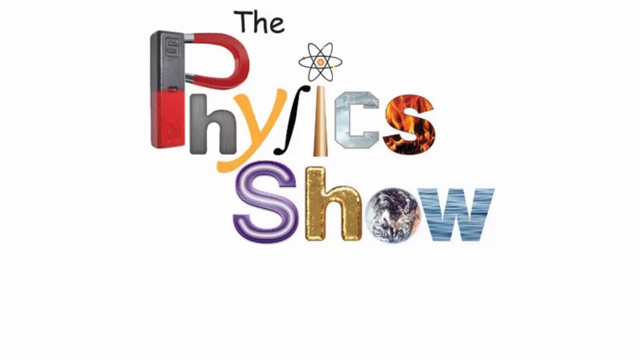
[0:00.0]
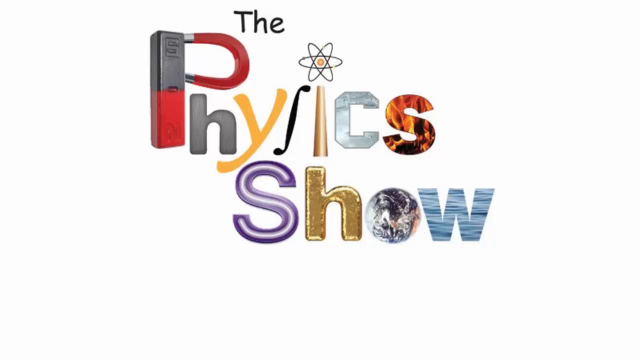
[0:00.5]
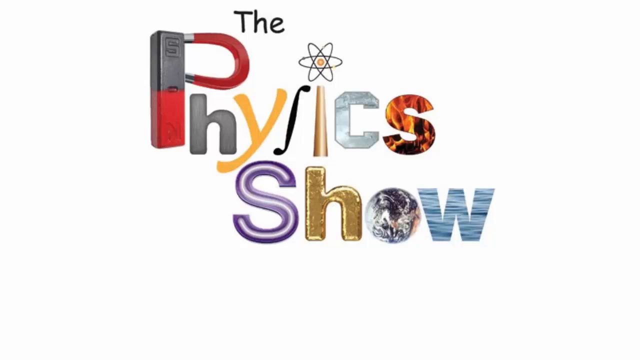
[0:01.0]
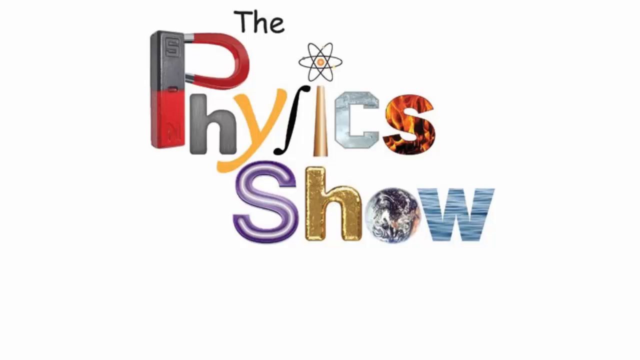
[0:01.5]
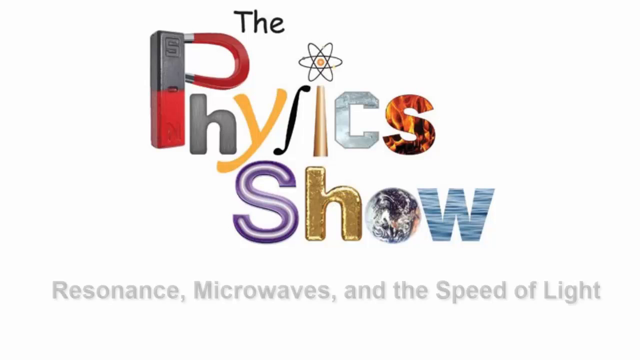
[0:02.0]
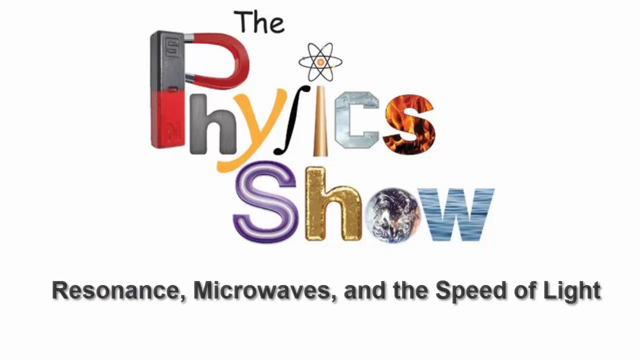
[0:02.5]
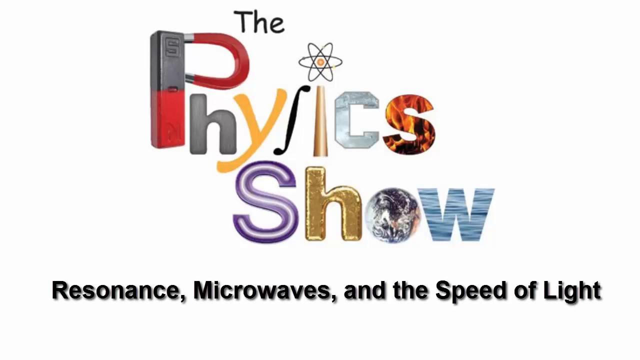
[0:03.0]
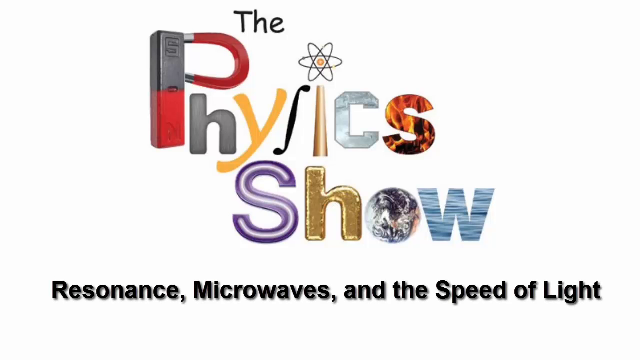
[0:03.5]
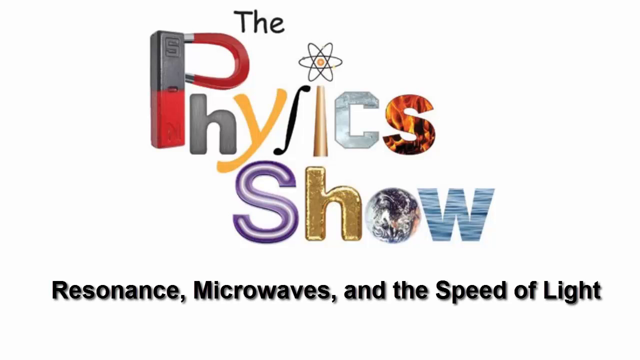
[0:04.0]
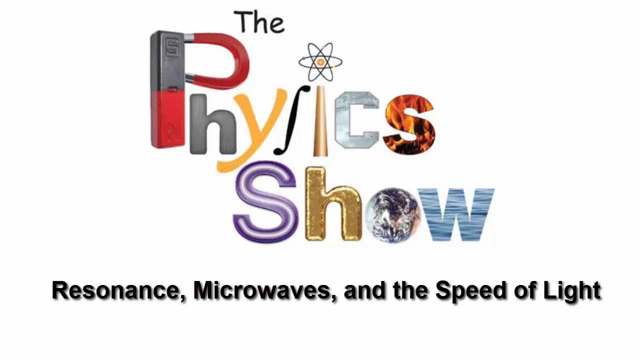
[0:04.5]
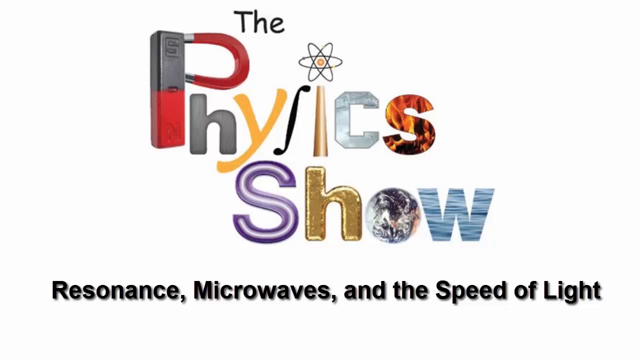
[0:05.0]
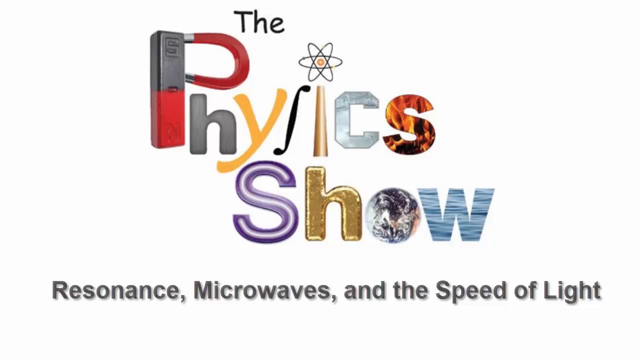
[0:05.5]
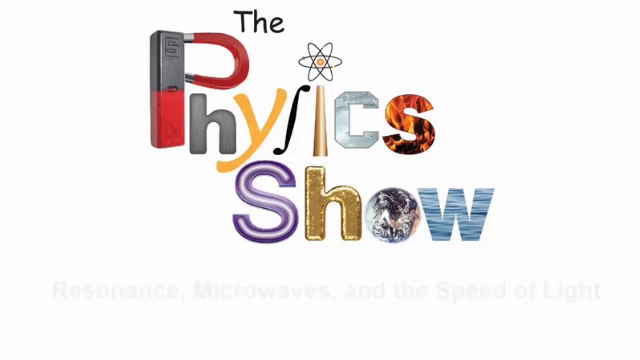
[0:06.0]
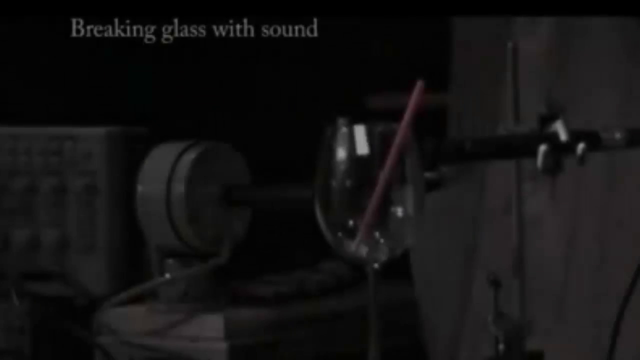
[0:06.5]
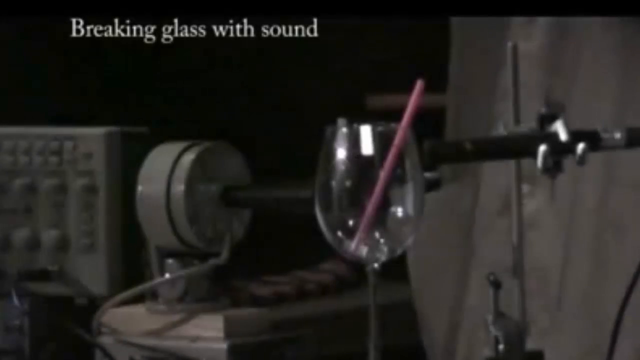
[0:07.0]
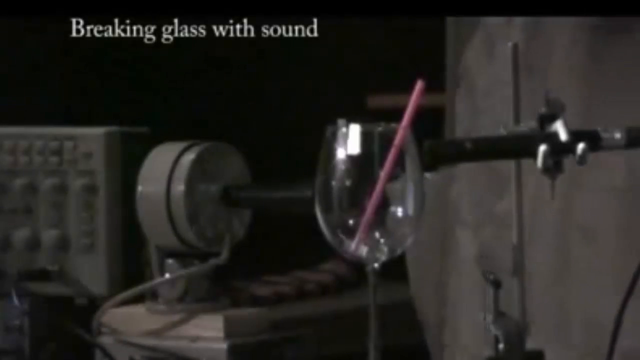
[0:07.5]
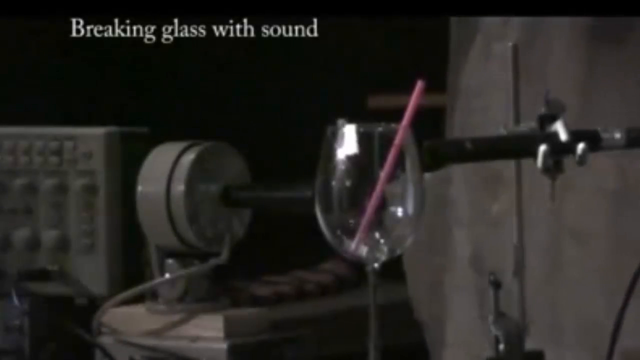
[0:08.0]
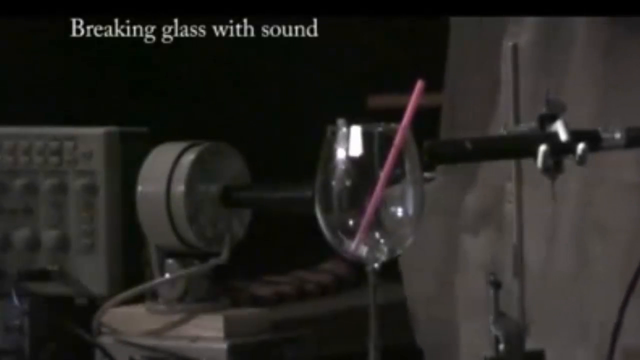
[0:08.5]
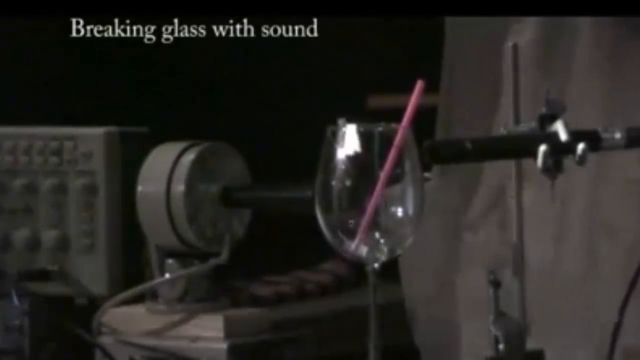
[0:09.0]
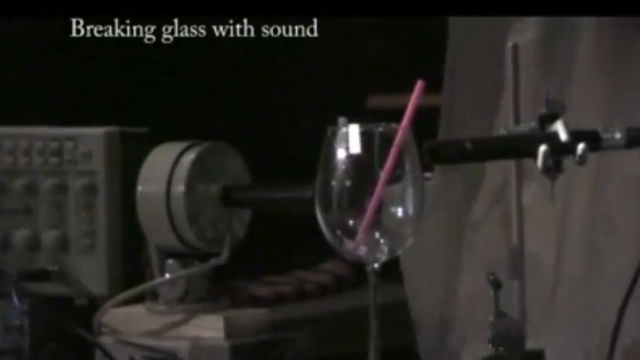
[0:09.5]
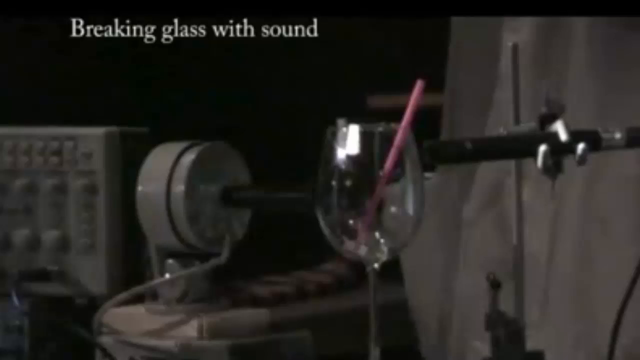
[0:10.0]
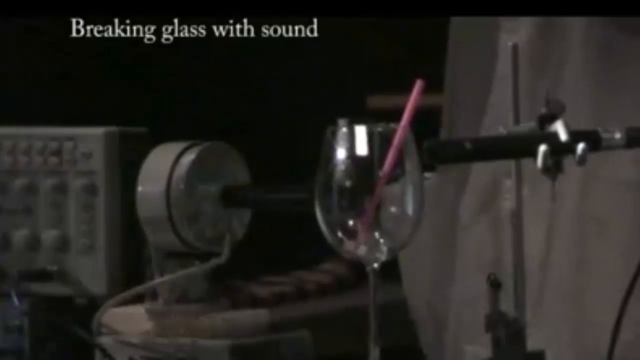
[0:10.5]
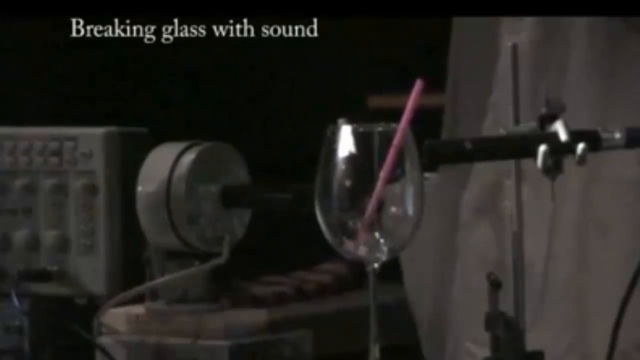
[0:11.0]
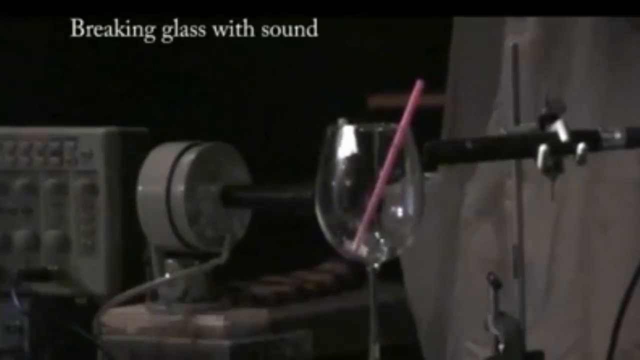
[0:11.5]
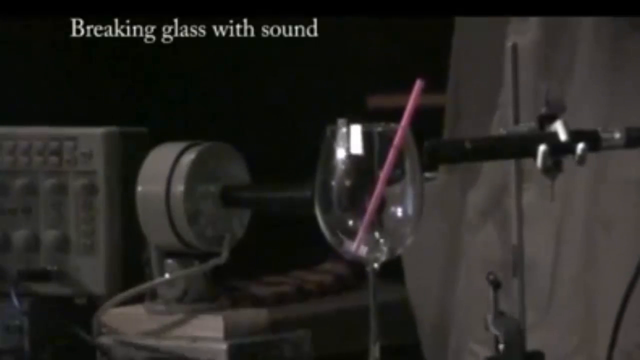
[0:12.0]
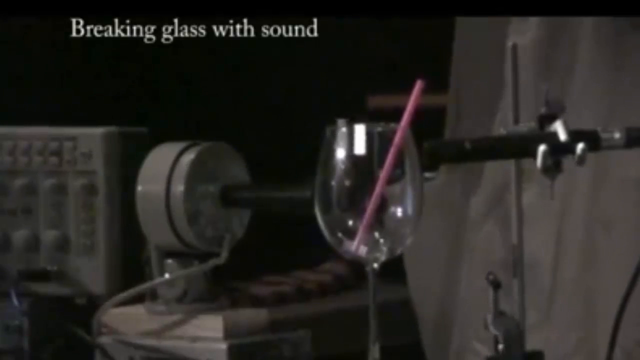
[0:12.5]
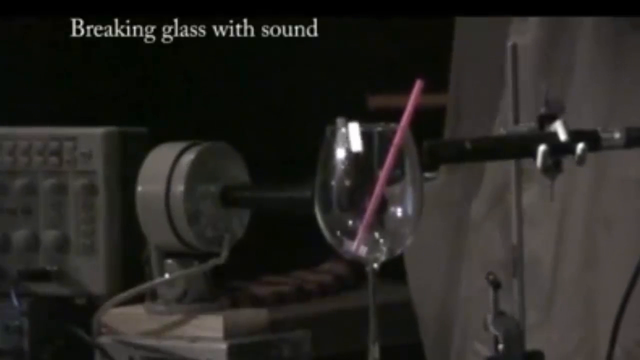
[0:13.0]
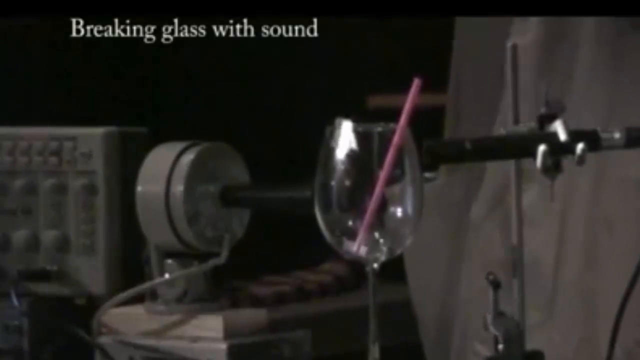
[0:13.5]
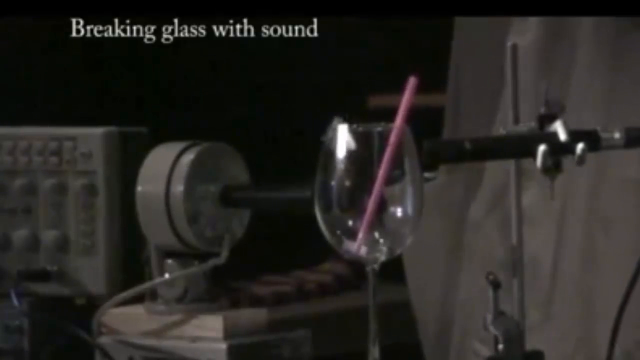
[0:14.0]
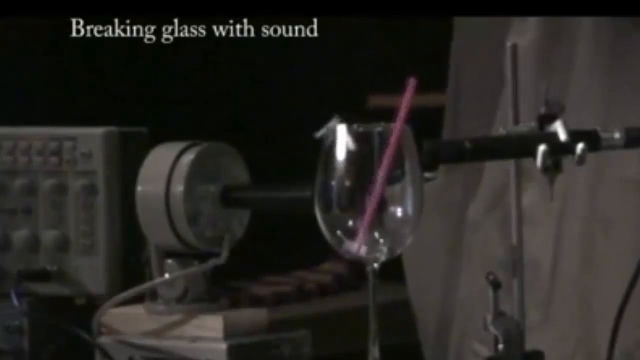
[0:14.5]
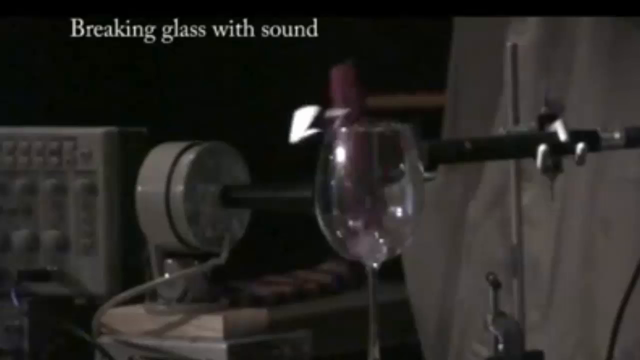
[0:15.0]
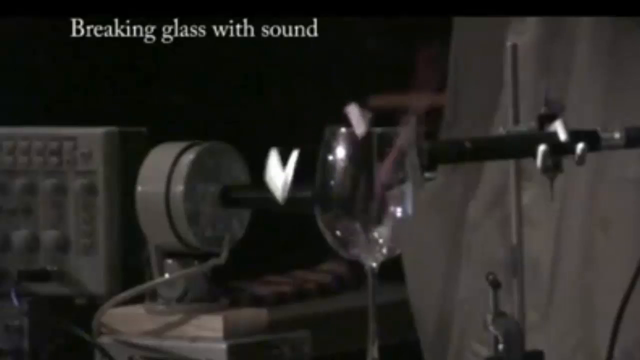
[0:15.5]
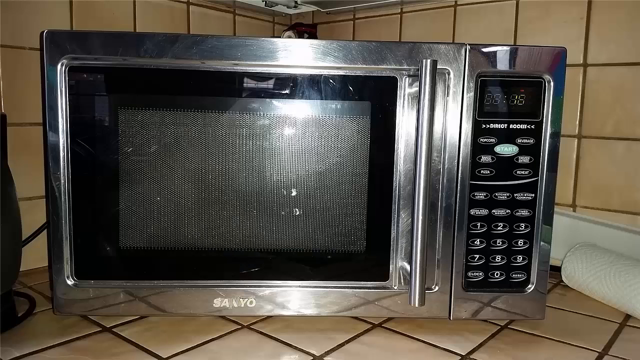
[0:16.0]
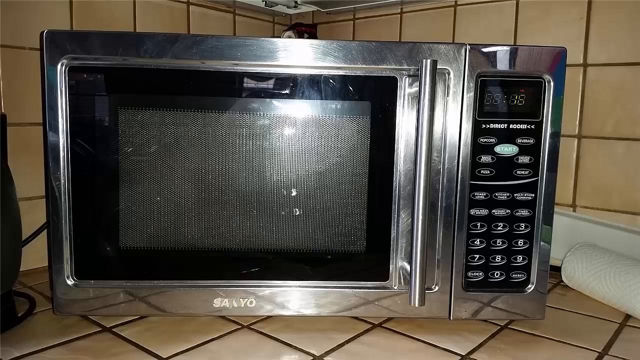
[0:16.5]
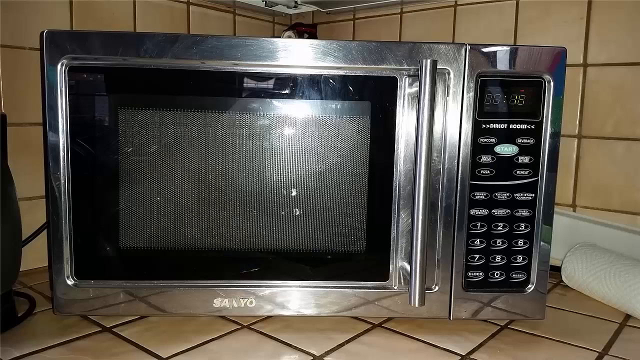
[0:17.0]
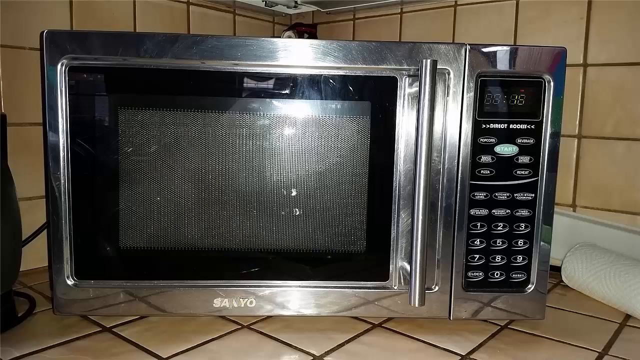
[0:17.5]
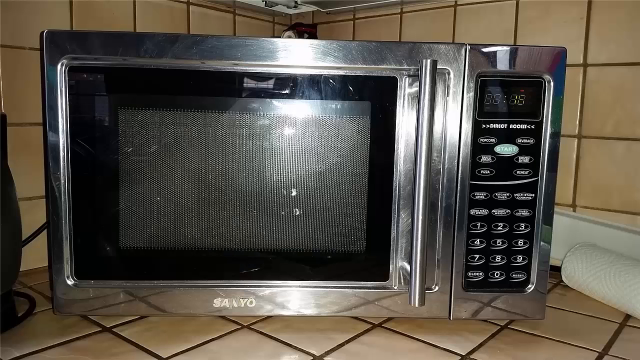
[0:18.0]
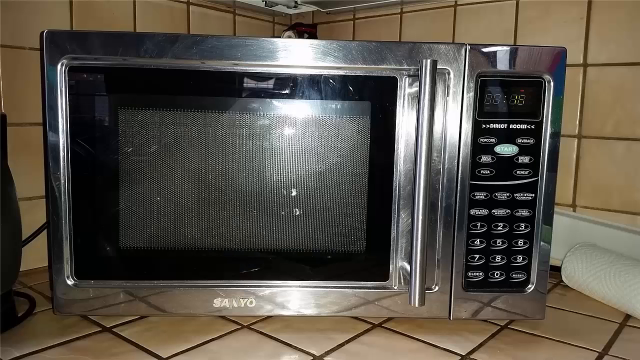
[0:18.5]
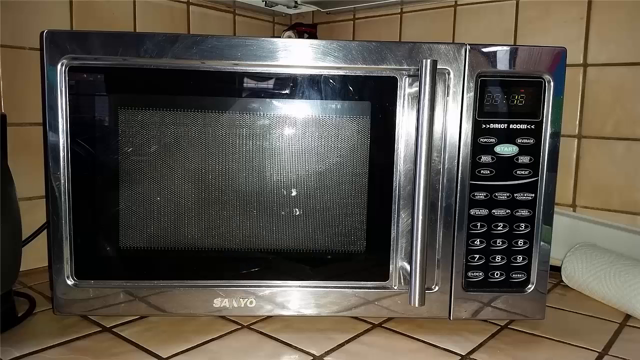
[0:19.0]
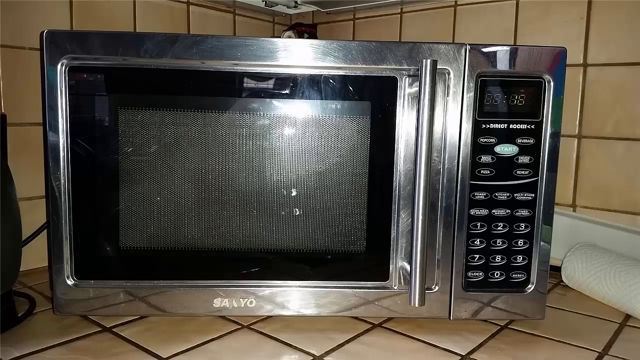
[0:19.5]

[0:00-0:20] The video opens with a still screen that says "the physics show"; the O in "show" is a picture of Earth from space. Writing in black then pops up that says "resonance, microwaves, and the speed of light." The video changes from the opening screen to an image of a wine glass with a pink straw in it, surrounded by metal gadgets whose purpose cannot be told. The straw wiggles around, and two gloved hands that look animated go off to the sides of the wine glass. A microwave is then shown. The microwave is silver and sits on a countertop with yellowy-beige tiles as the backsplash behind it.